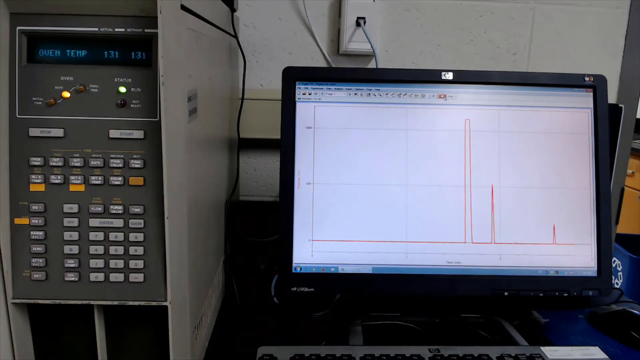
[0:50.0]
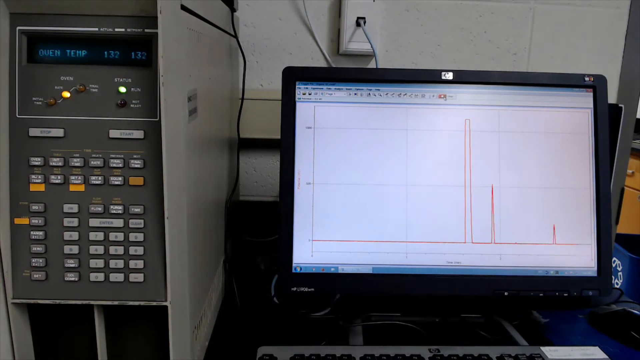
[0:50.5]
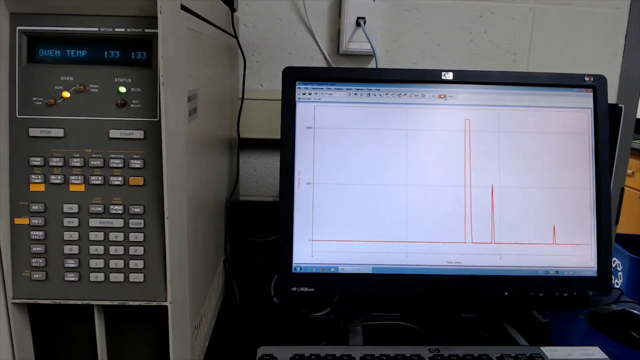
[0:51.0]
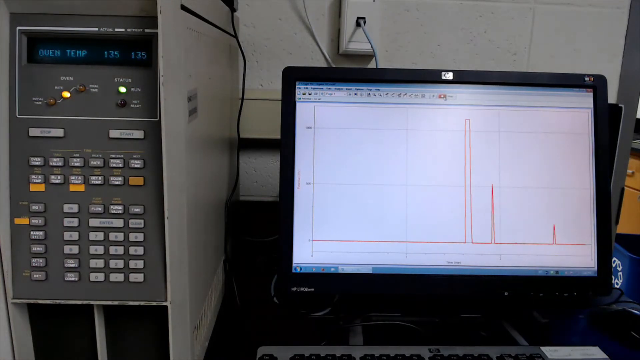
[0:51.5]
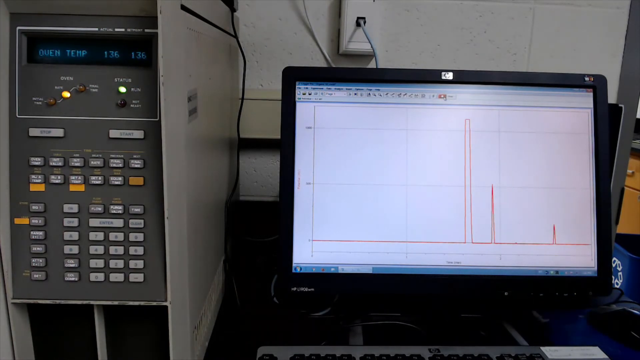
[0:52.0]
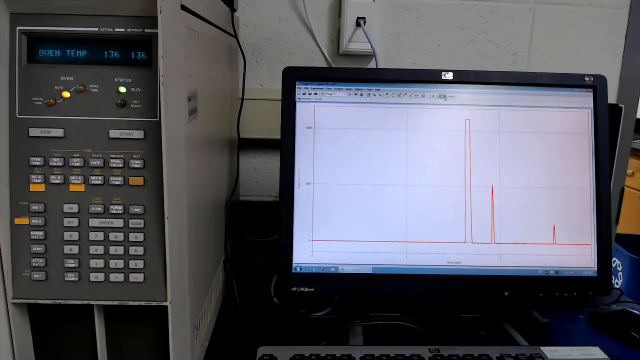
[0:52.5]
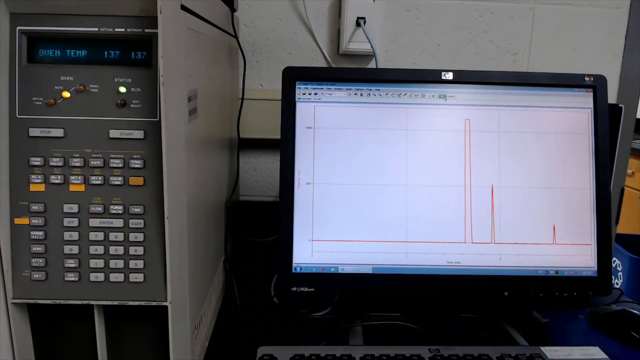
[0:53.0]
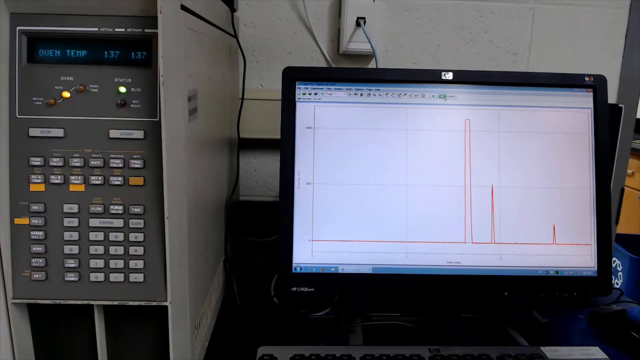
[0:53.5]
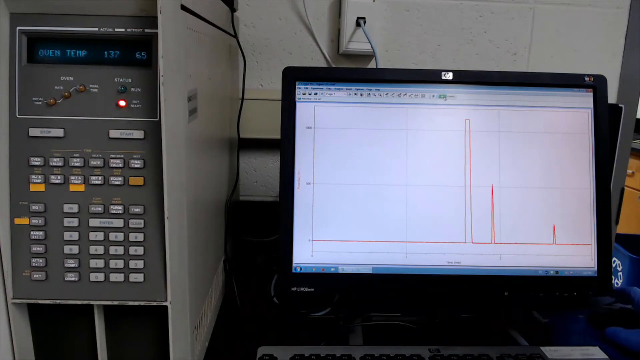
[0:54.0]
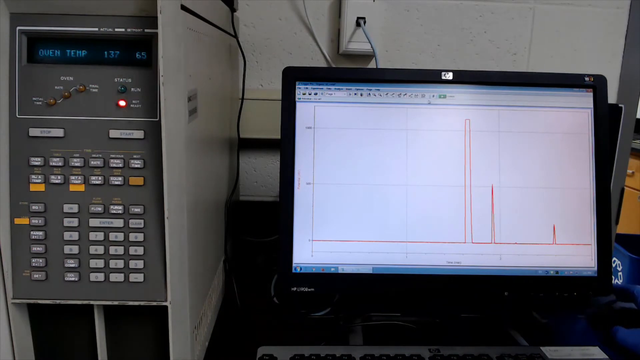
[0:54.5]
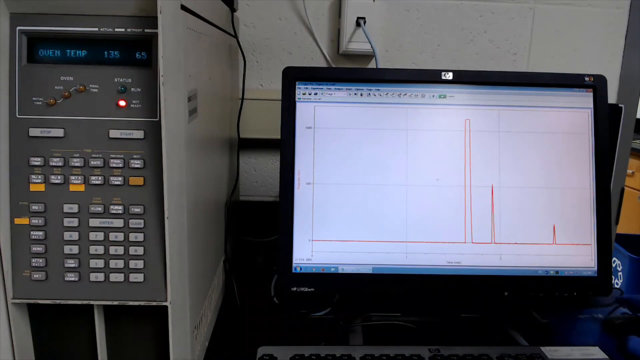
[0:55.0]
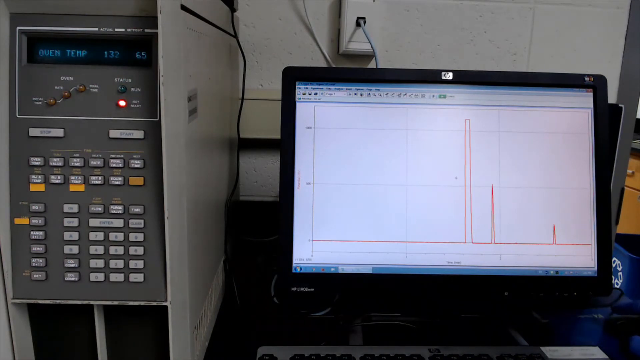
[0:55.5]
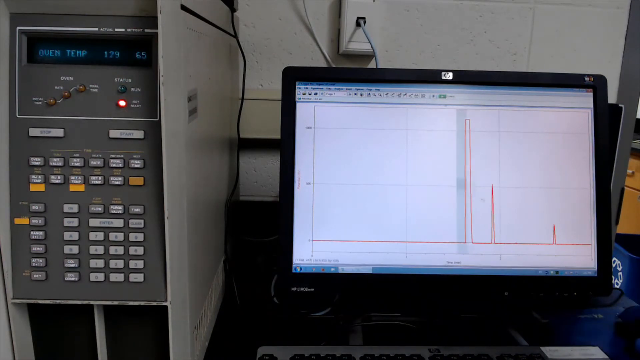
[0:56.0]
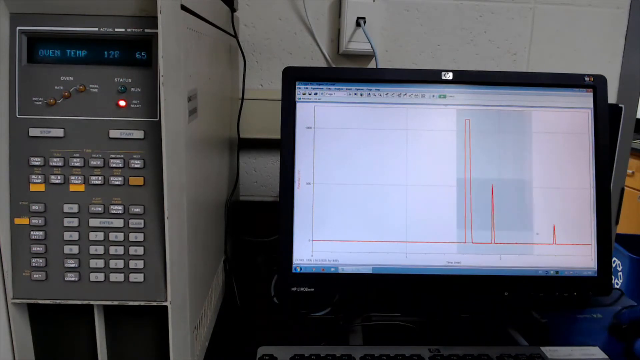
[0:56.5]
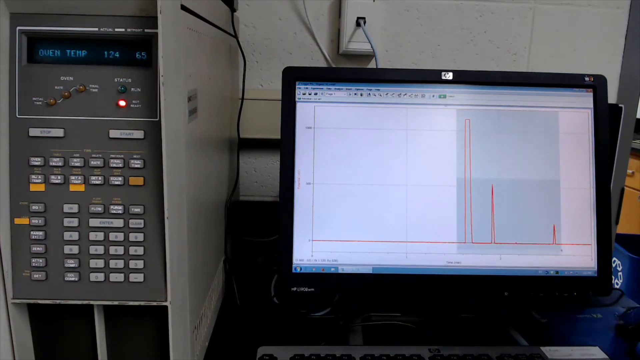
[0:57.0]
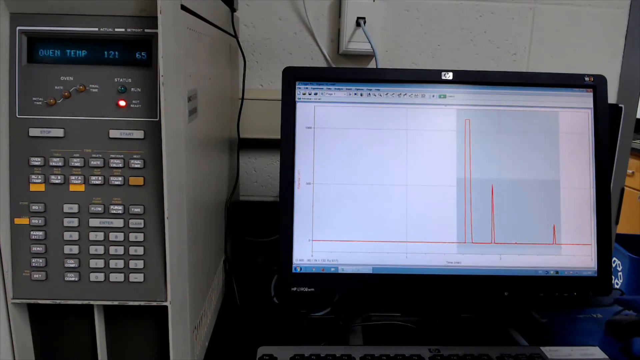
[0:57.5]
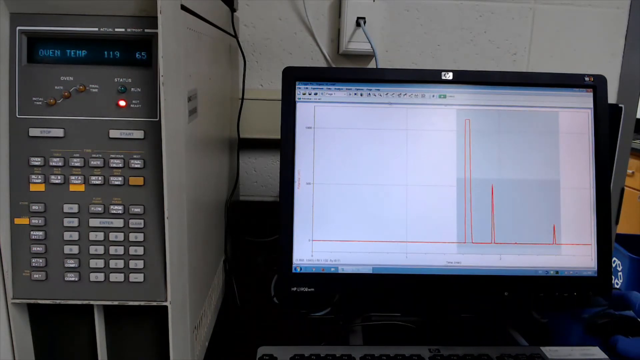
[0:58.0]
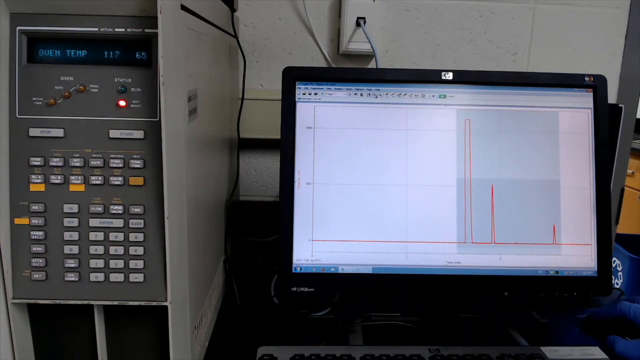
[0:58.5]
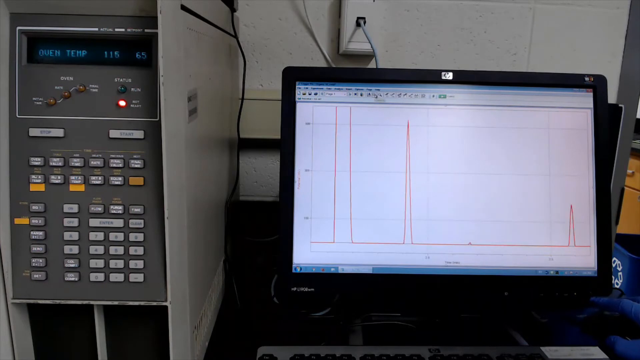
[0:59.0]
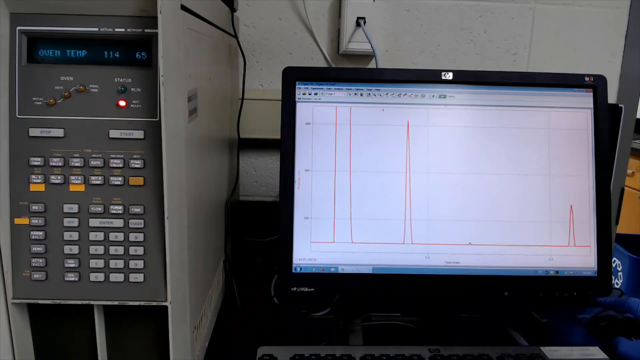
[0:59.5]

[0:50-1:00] A hand wearing blue gloves moves around a laptop and a testing machine, but no person is visible beyond the hand. The laptop displays the chemical's results, the testing apparently finished.